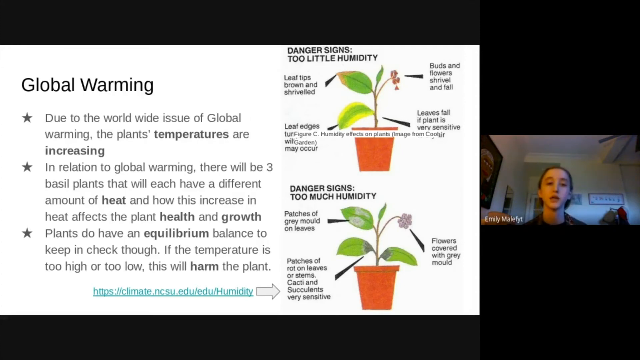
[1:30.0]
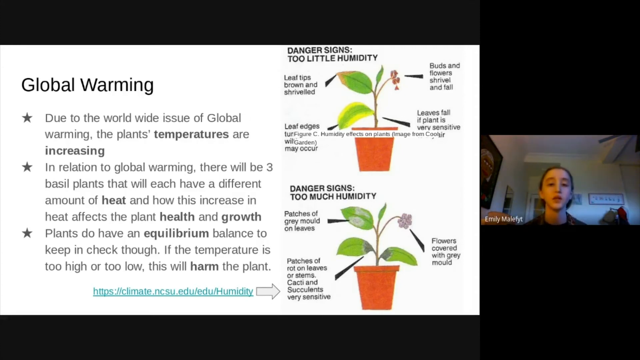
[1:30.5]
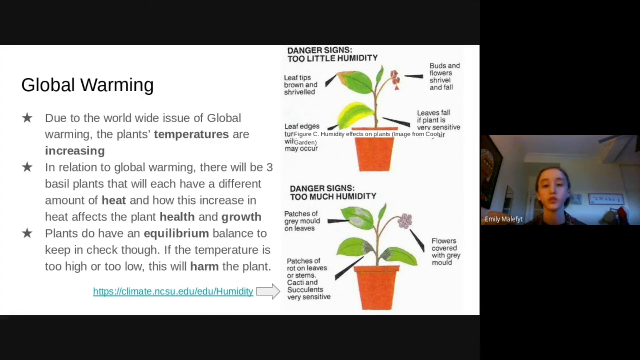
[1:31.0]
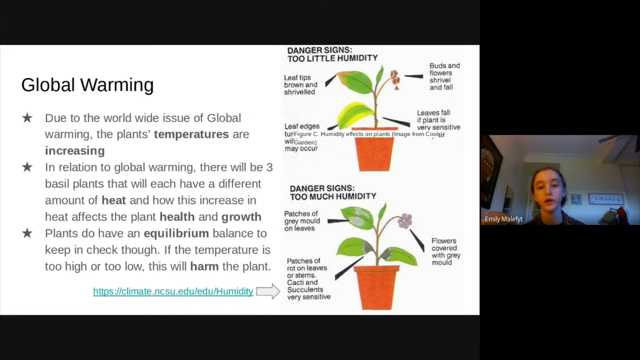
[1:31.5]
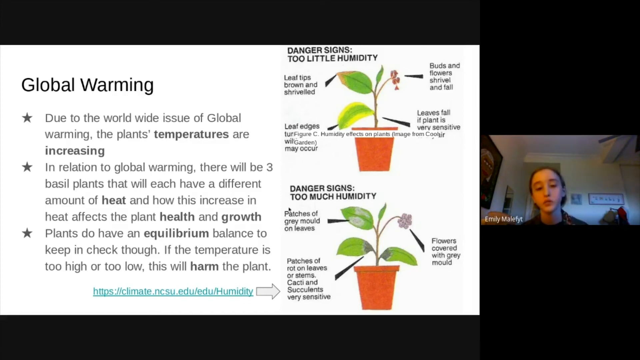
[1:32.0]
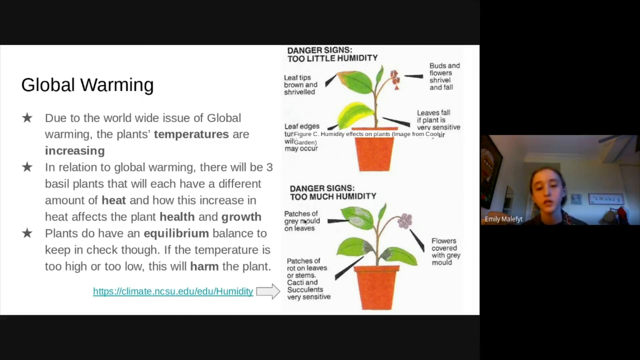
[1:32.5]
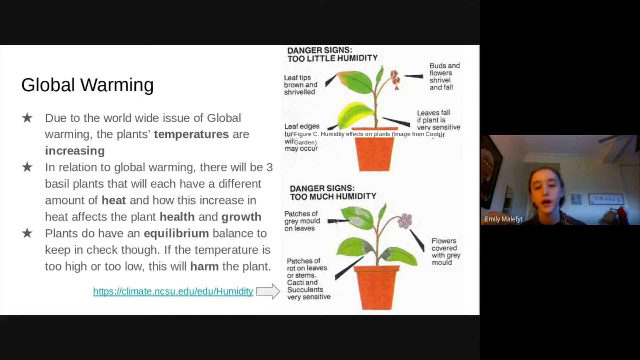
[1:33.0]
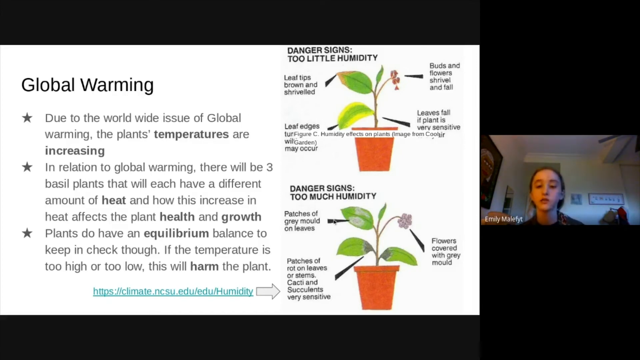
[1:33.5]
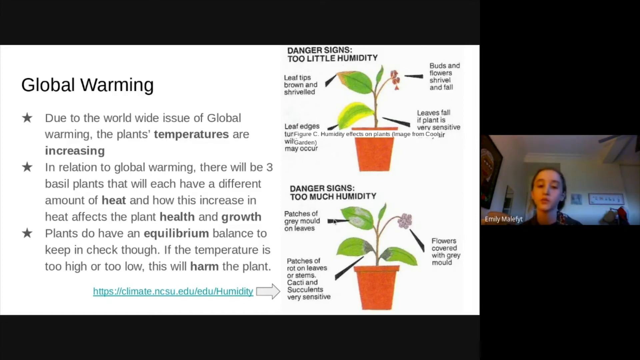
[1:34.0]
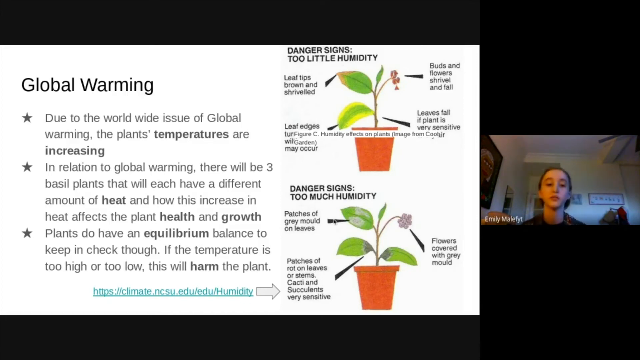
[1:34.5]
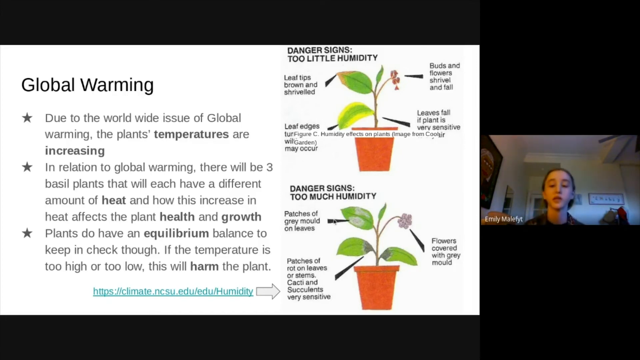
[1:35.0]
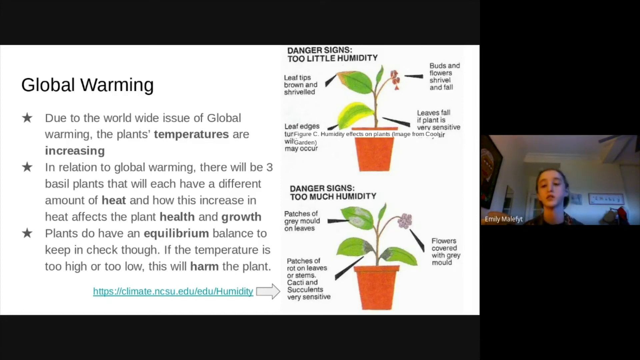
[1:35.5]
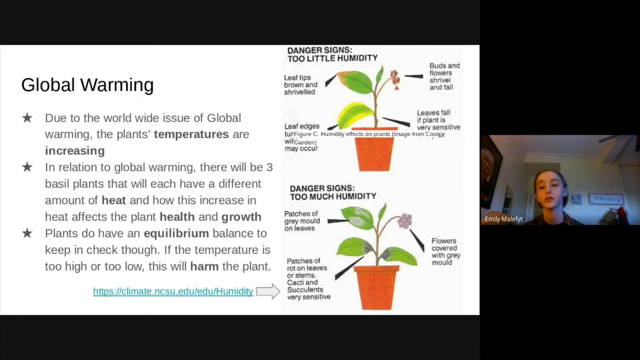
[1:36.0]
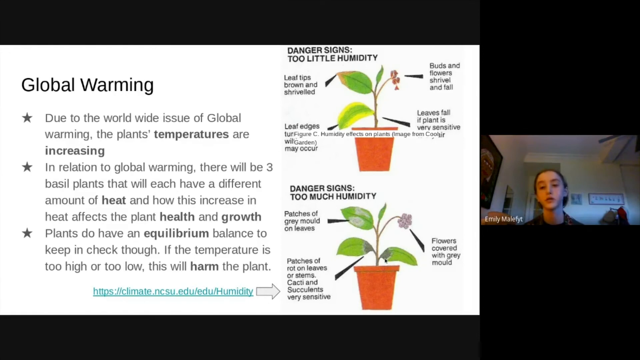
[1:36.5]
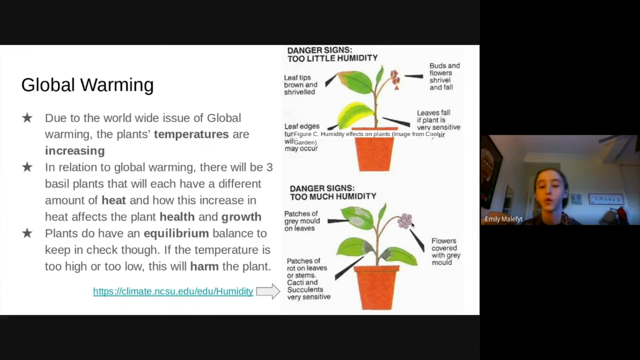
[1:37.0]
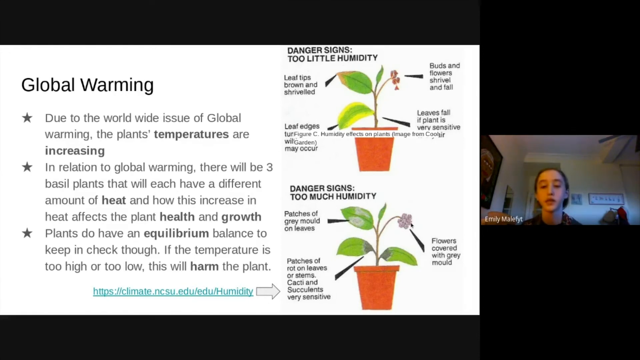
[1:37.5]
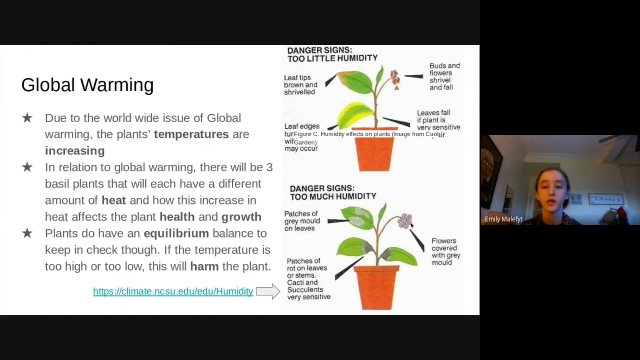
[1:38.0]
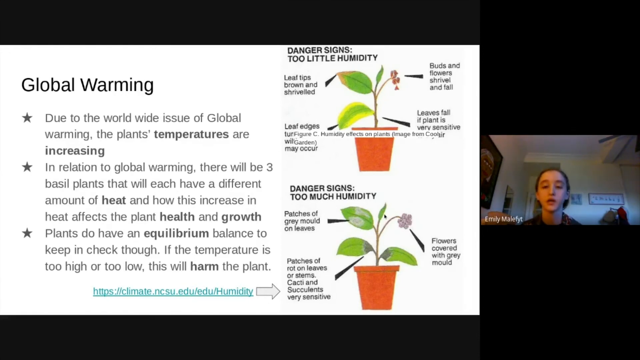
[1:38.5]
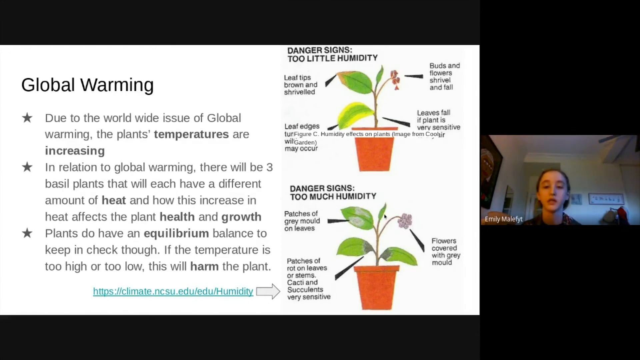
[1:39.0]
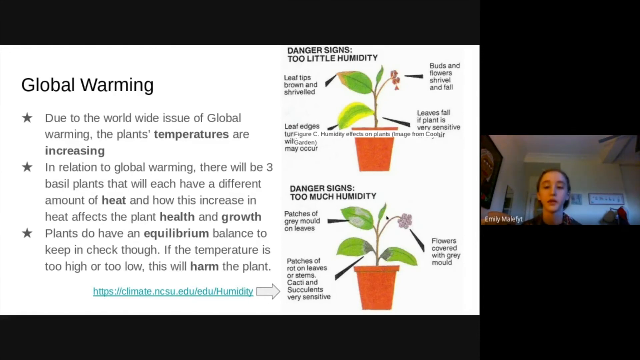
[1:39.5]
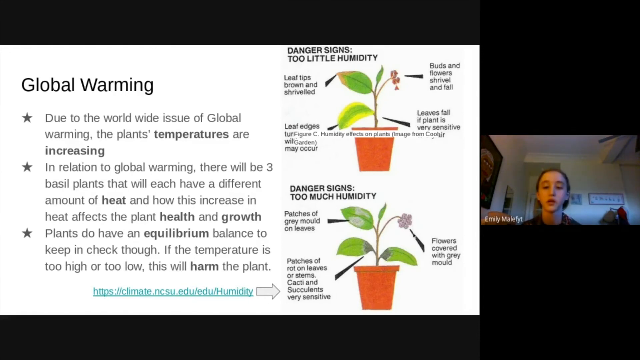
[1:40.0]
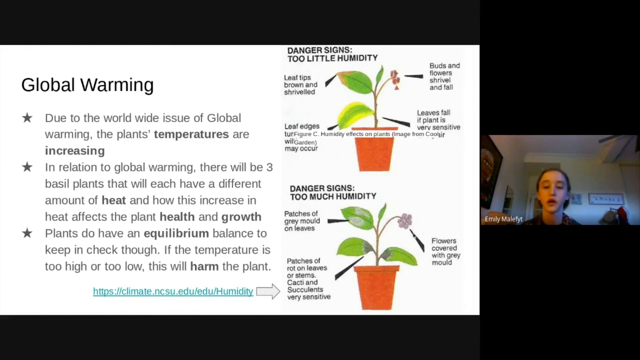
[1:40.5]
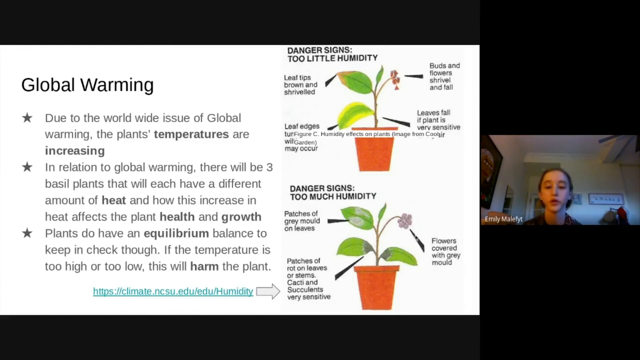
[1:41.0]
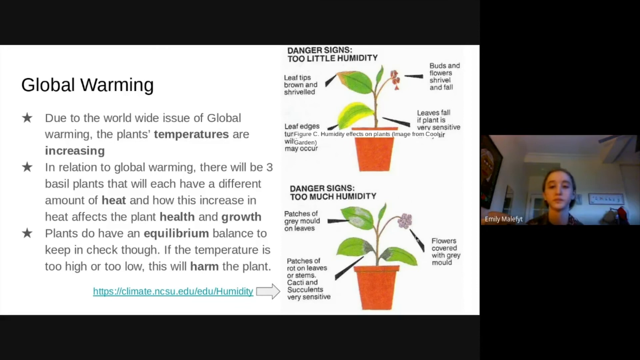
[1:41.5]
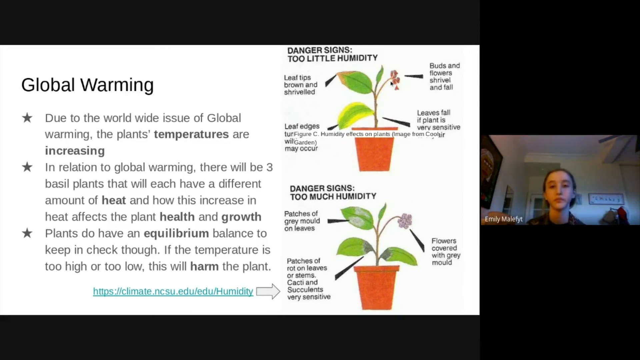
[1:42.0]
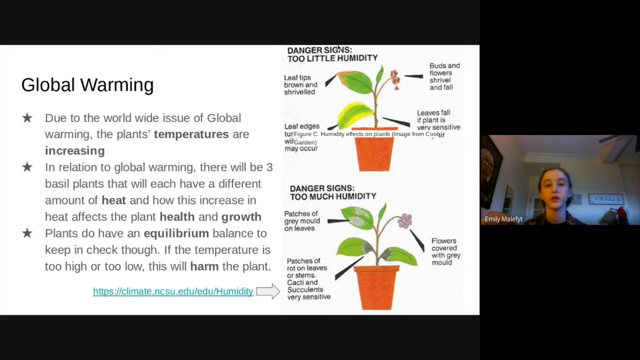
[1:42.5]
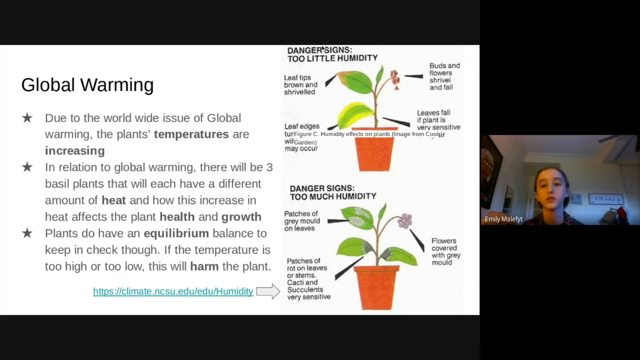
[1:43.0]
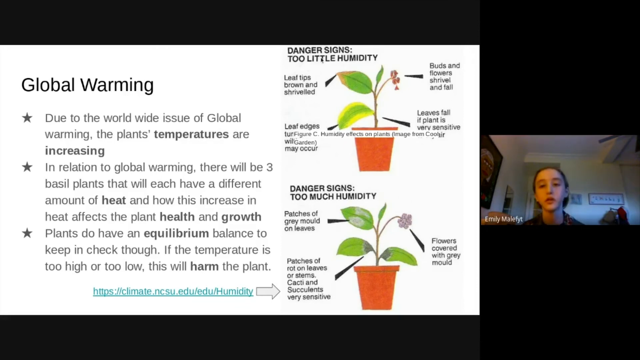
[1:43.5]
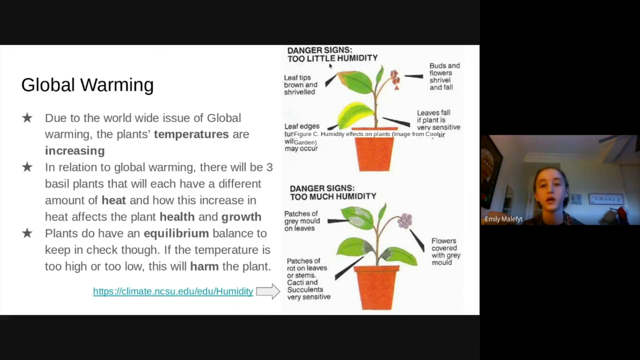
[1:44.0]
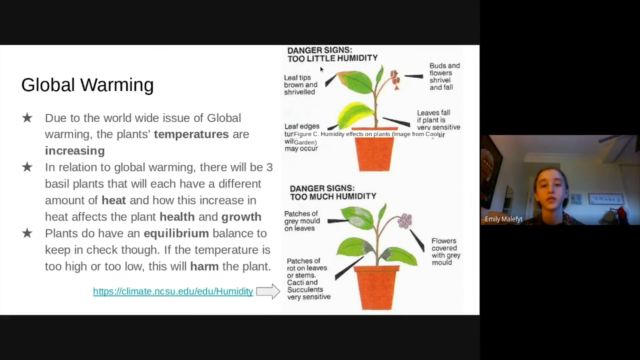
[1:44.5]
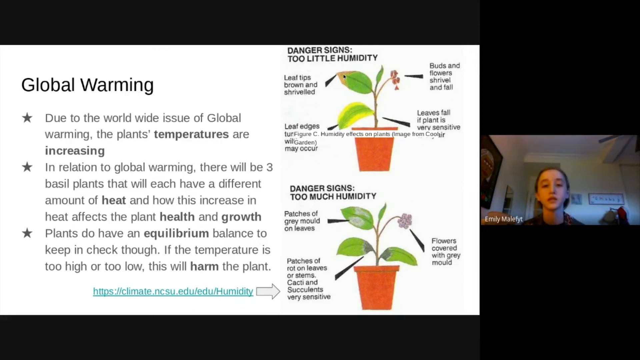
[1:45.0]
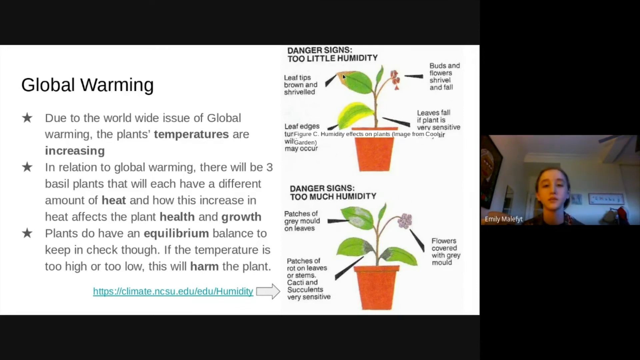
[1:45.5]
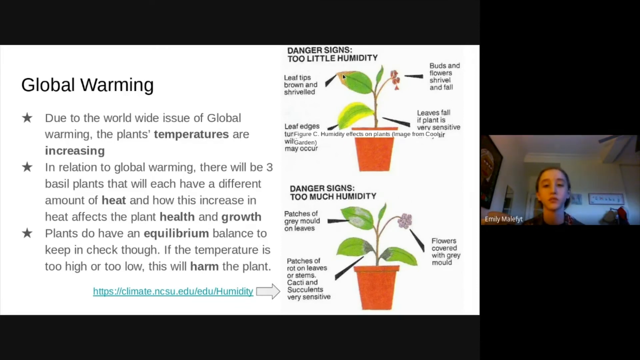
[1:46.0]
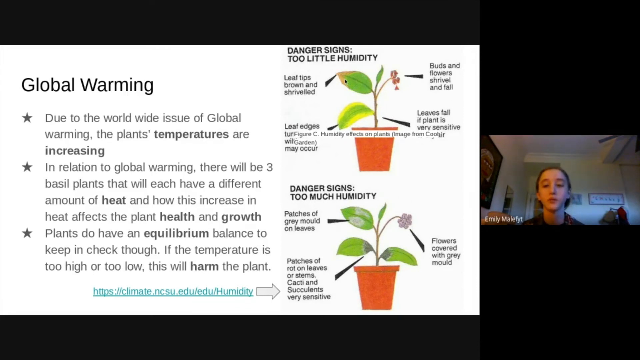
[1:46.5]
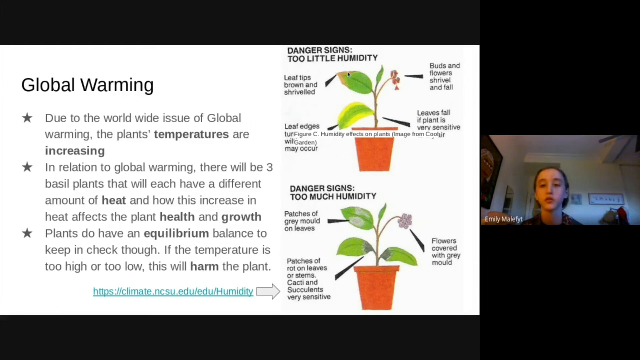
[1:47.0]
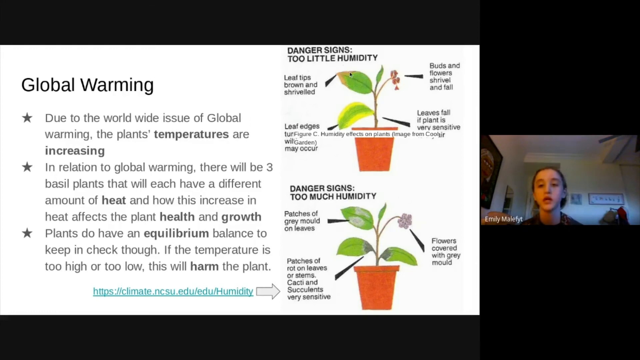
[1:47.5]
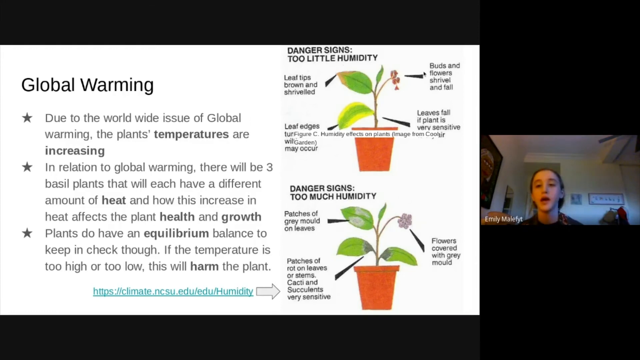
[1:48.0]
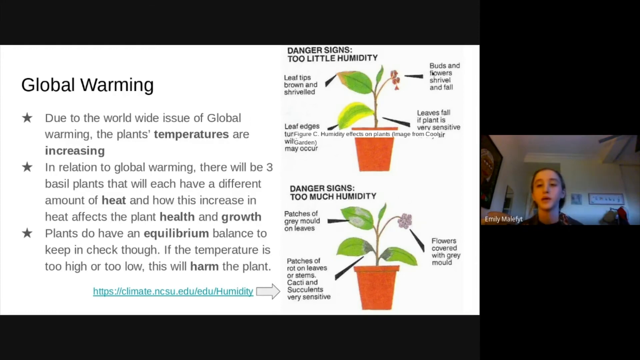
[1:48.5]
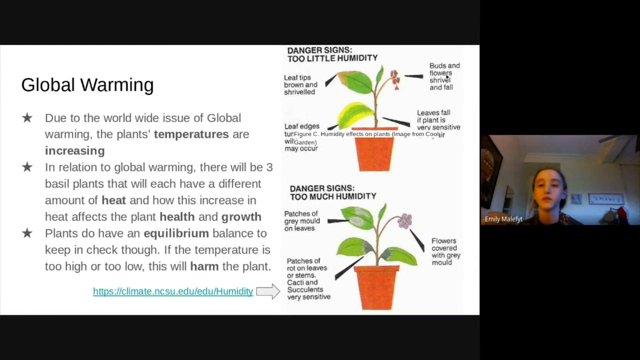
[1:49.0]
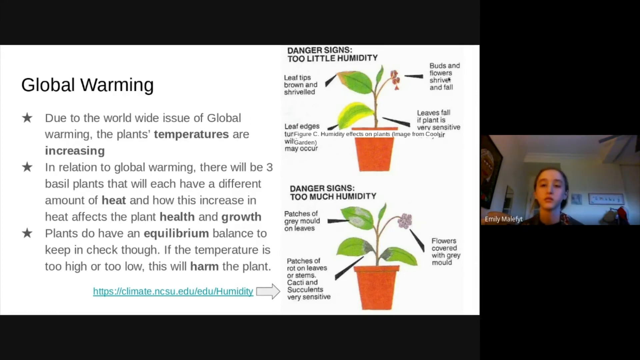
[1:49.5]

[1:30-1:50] She continues speaking as the cursor reappears just under the text reading too much humidity. It hovers over the line annotating where the patches of gray mold on leaves are, then moves to the bottom of the plant where rotting starts to appear on the leaves at the base. She then points at the flower at the top right of the plant, which seems to be covered with gray mold, then at the top of the plant where there is a single tiny leaf, and then at the line pointing to the flower again. Next she moves to the top of the slide, where there is a diagram for too little humidity, hovers over those words, points at the browned, shriveled leaf tips at the top left, and moves over to the buds and flowers that shrivel and fall.